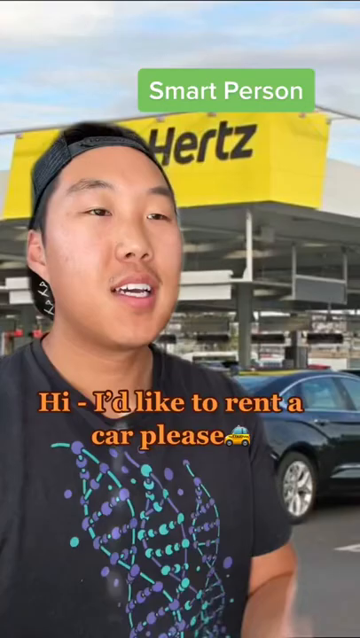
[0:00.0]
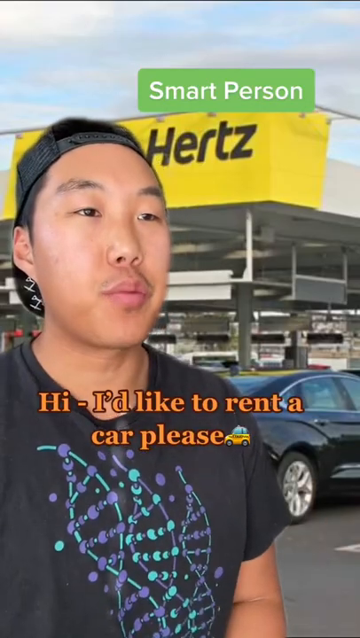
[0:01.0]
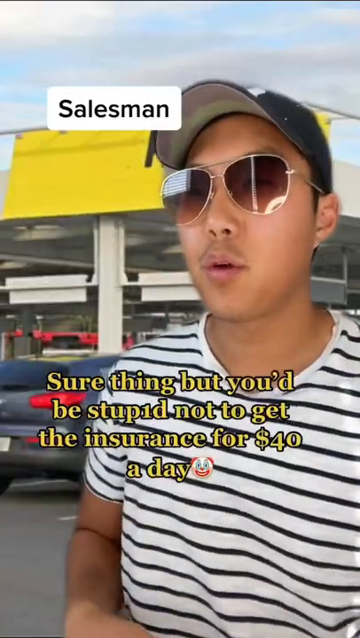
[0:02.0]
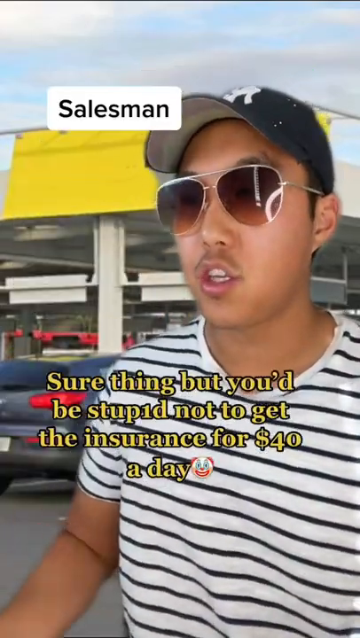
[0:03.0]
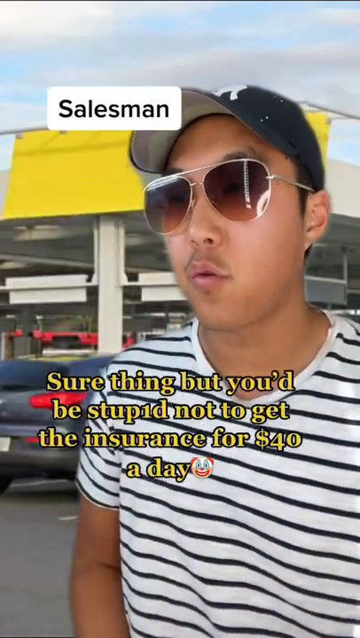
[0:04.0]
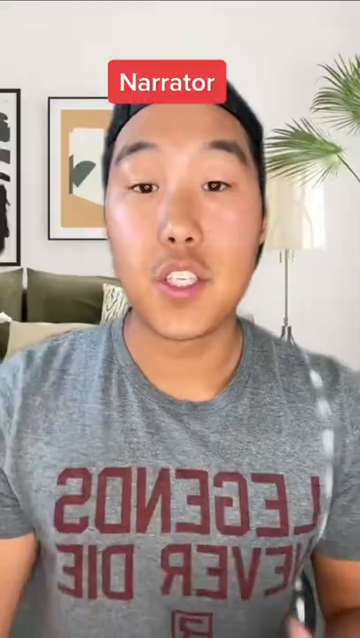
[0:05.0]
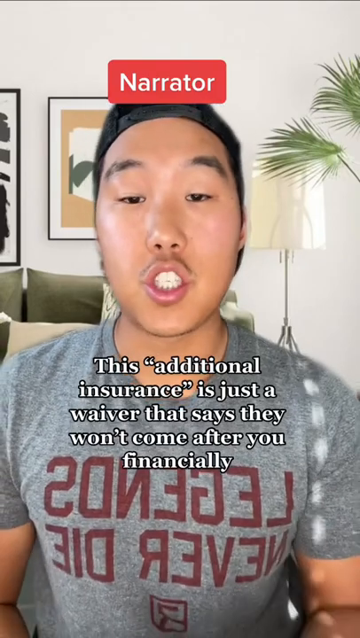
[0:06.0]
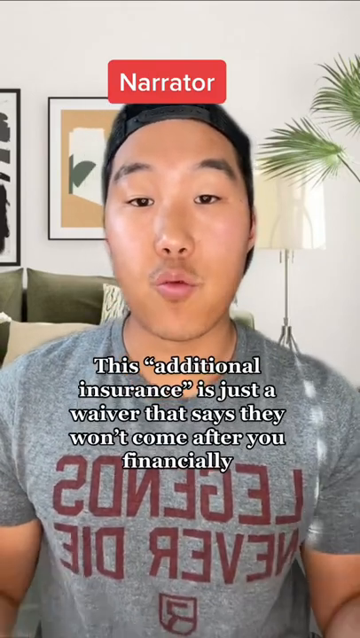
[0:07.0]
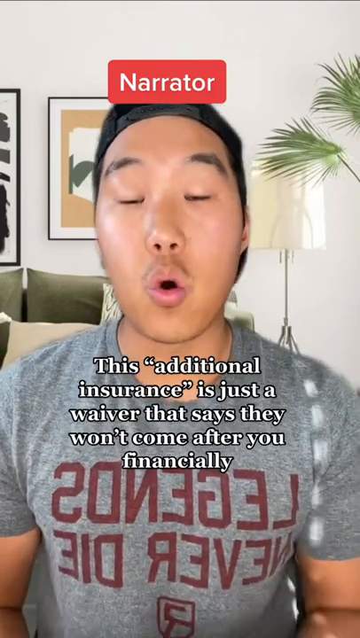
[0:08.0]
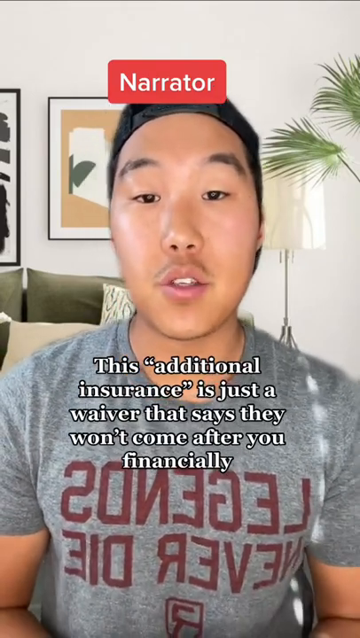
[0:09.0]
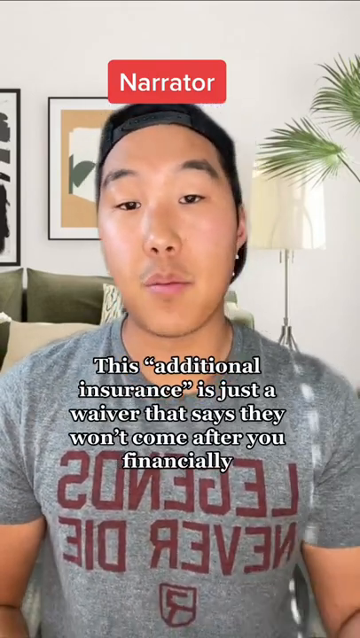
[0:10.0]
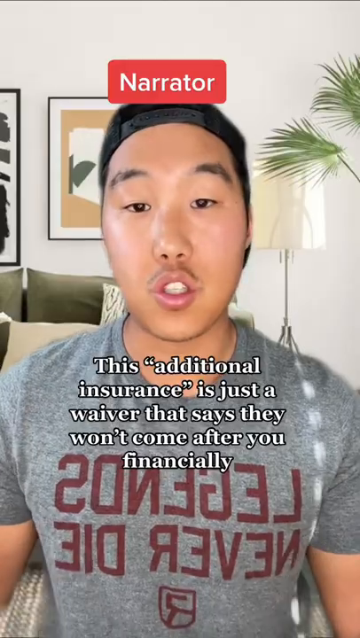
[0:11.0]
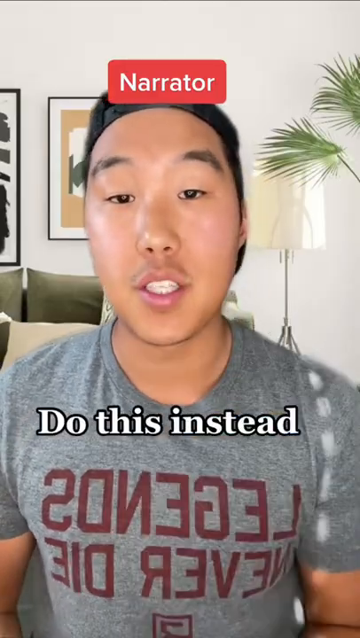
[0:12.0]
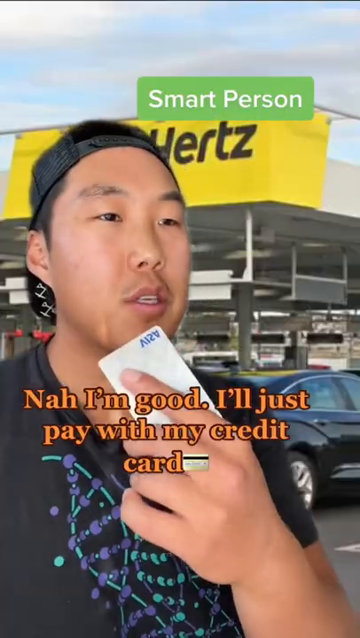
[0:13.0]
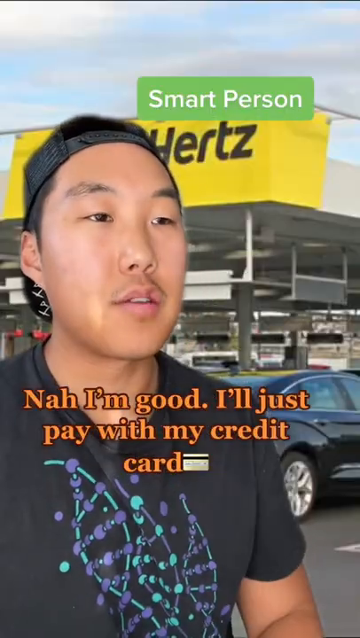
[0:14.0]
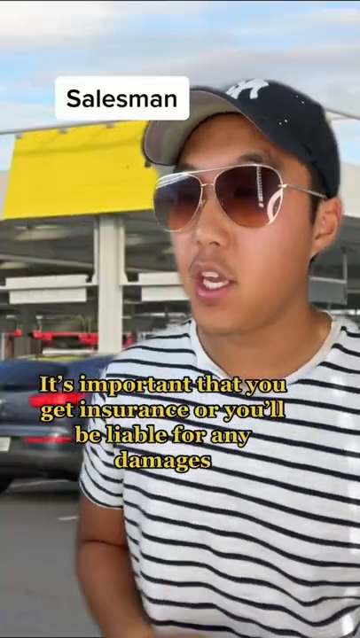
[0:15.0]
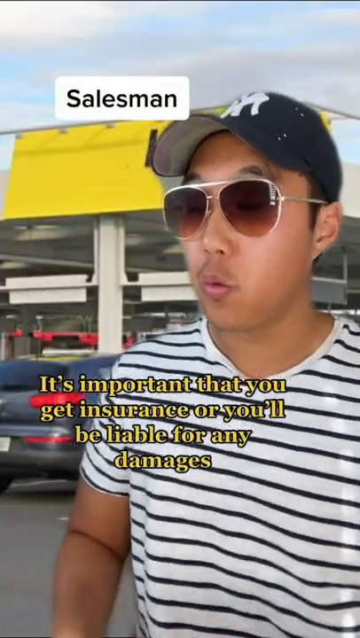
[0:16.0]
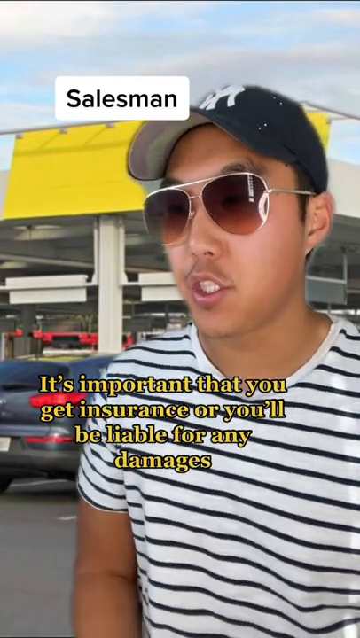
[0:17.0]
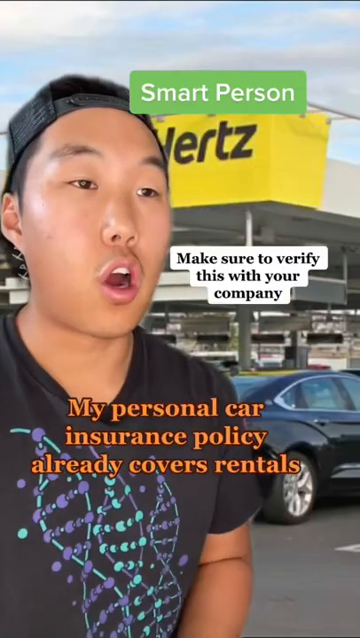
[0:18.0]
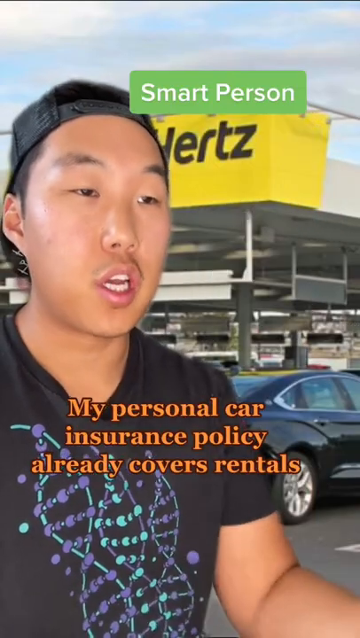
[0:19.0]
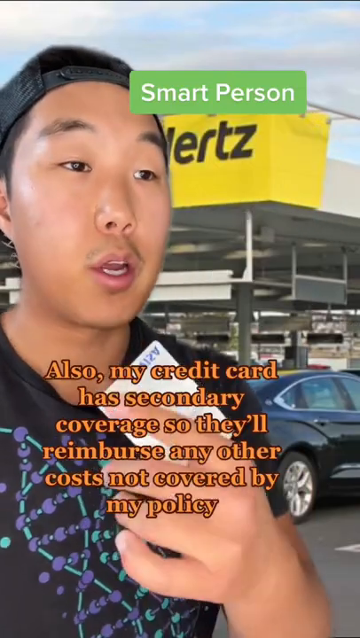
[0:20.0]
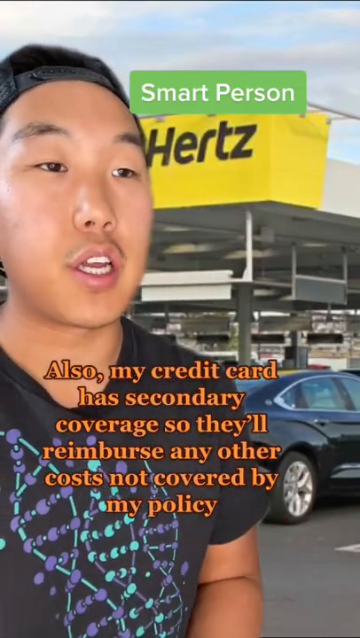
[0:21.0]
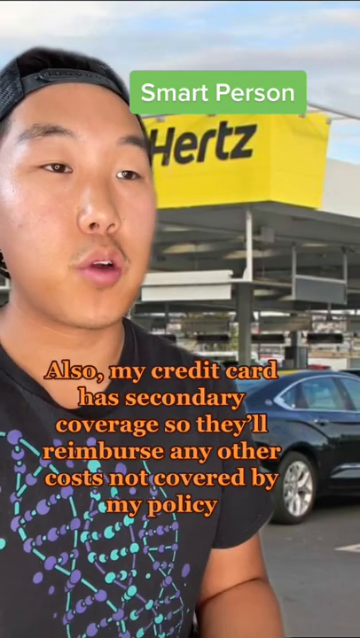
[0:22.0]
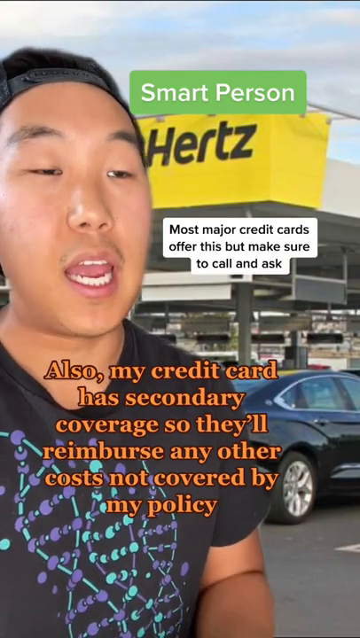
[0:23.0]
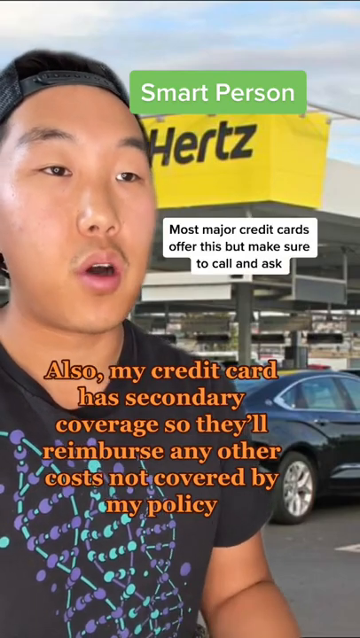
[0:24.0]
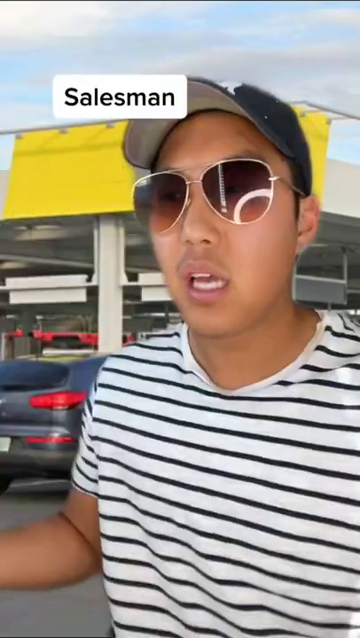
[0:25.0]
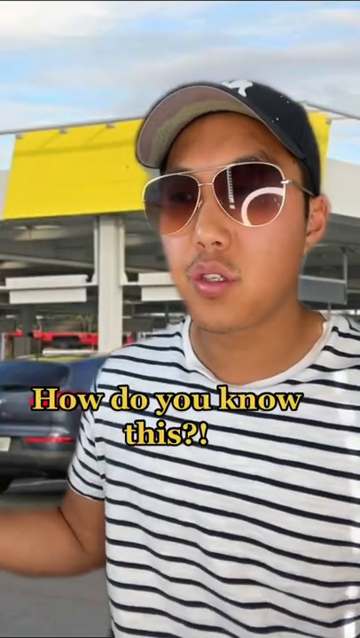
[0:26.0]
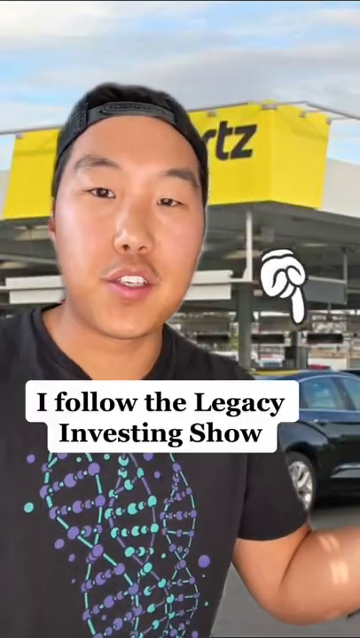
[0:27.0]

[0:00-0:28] A man who is Asian and probably young appears in a vertical-screen video that looks like a TikTok video. The background is a blue screen, and he is kind of talking to himself, as if playing two different characters, seemingly a customer and a salesperson or dealer. Behind him is a Hertz car rental dealership: on the roof of the building is a long yellow sign that says "Hertz" with the typical Hertz logo. There are palm trees, so he might be on vacation. A black sports car is behind him, along with a regular sedan and several other cars. The first person seen is apparently him, and he says, "Hi, I'd like to rent a car." The other character says, "sure thing," and mentions insurance for $40 a day. He mentions a traditional insurance waiver that says they won't come after you financially, then, like a narrator, says, "do this instead." In the same scenario he says, "nah, I'm good." The salesperson says, "it's important that you get insured or you'll be financially liable," and he replies, "my personal insurance already covers this," because he has full coverage. He is basically commenting on how to handle this kind of situation at a rental car dealership.